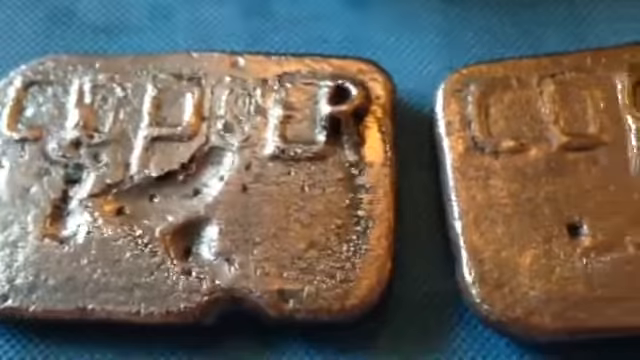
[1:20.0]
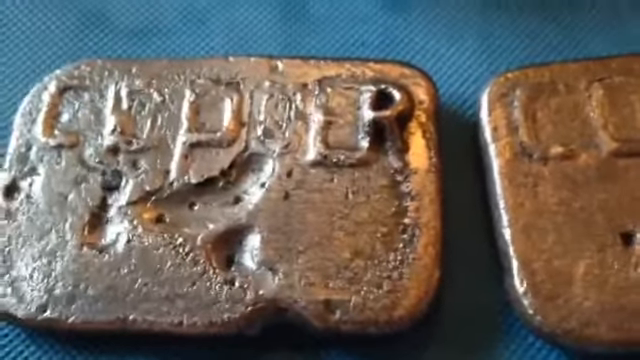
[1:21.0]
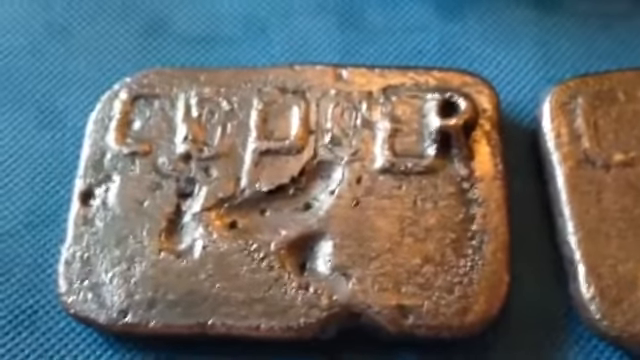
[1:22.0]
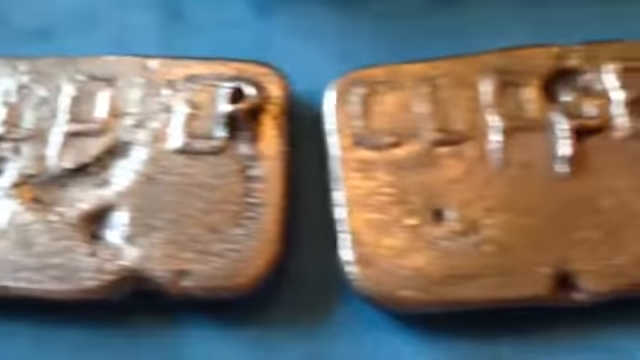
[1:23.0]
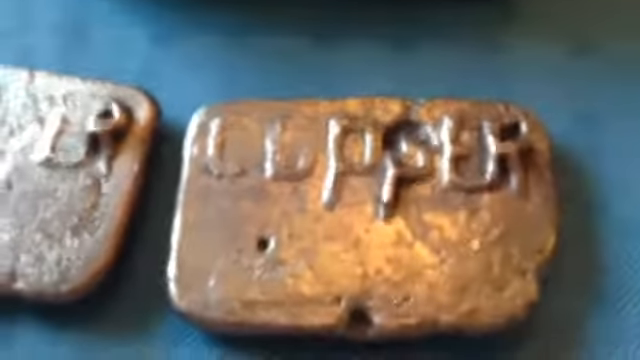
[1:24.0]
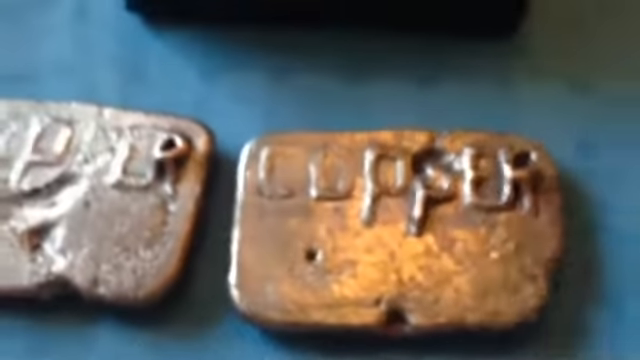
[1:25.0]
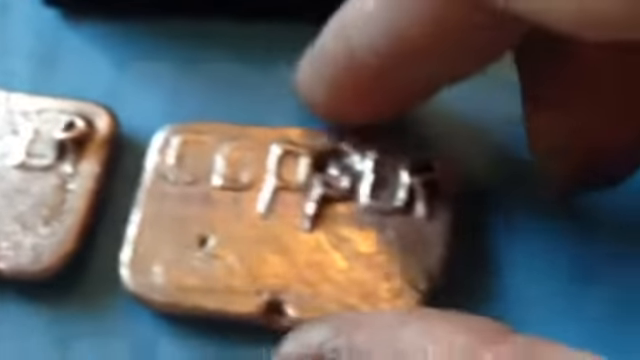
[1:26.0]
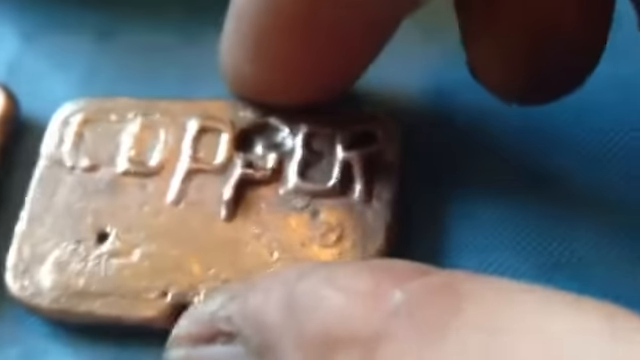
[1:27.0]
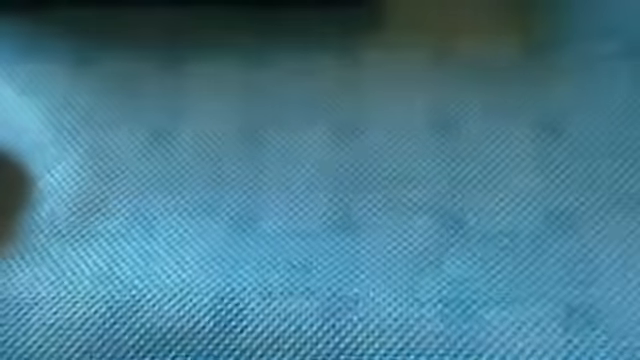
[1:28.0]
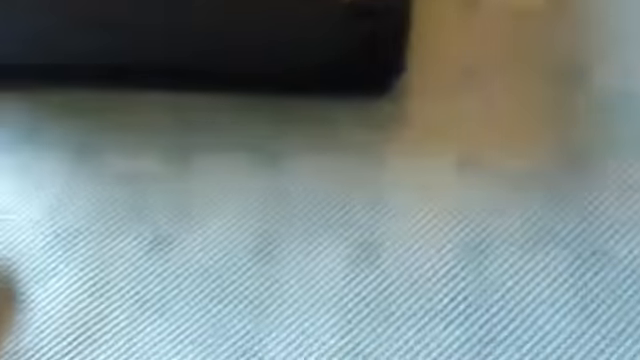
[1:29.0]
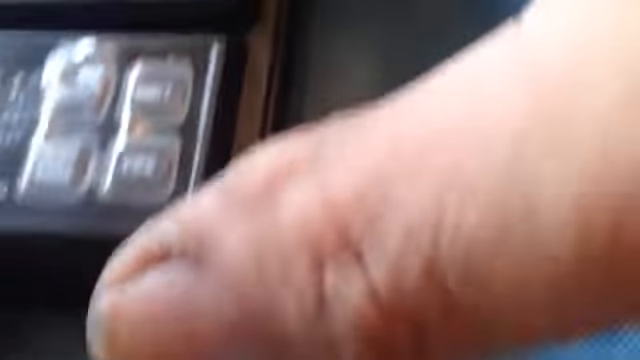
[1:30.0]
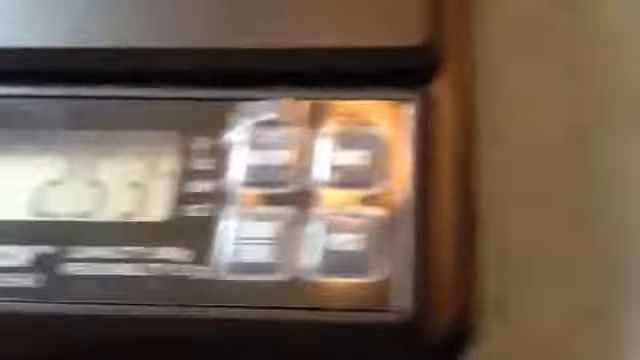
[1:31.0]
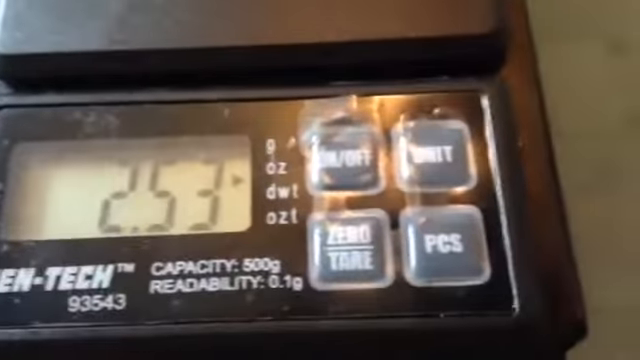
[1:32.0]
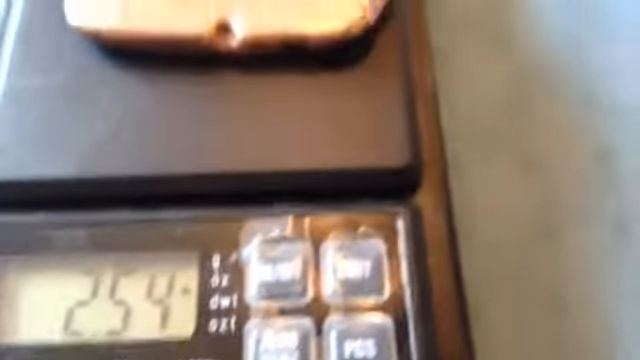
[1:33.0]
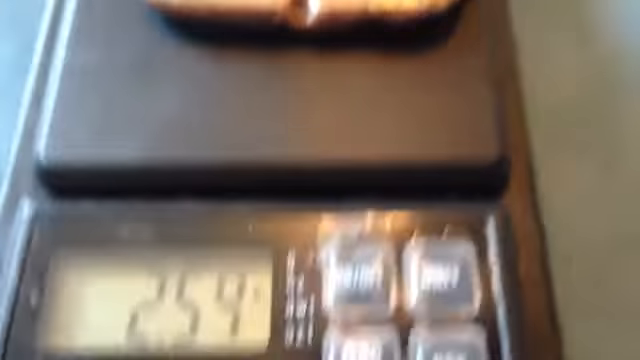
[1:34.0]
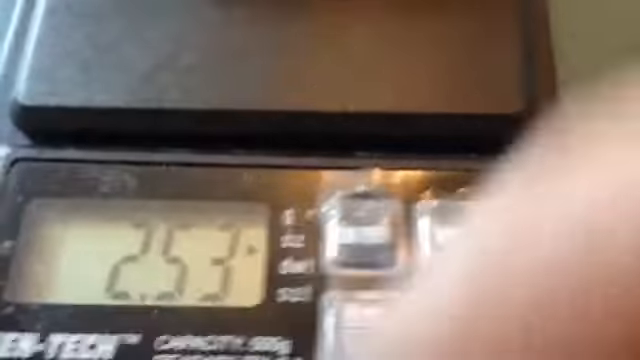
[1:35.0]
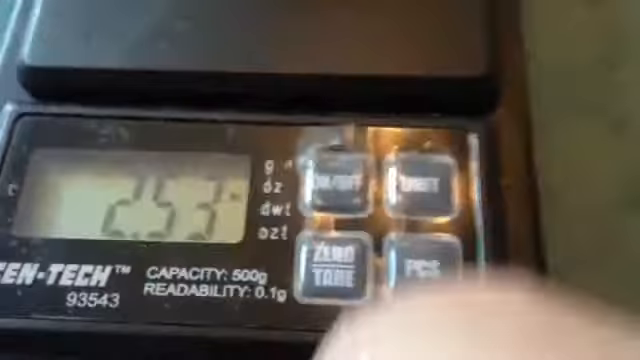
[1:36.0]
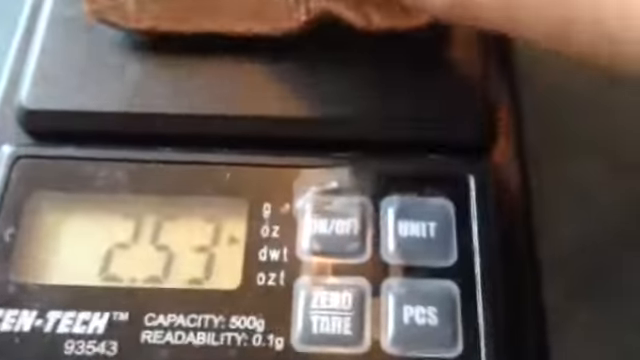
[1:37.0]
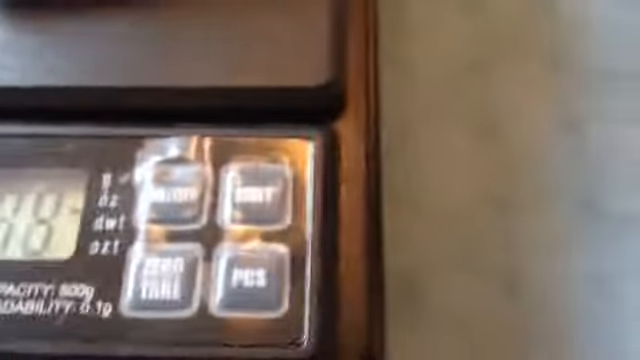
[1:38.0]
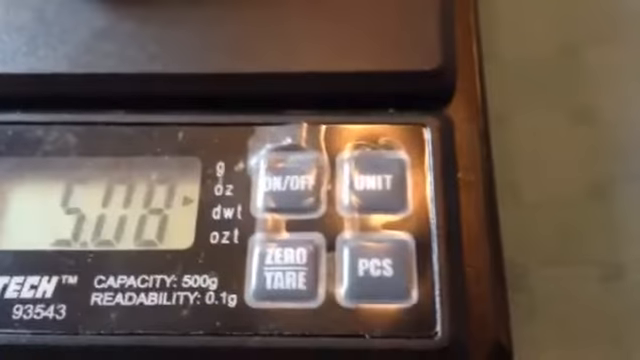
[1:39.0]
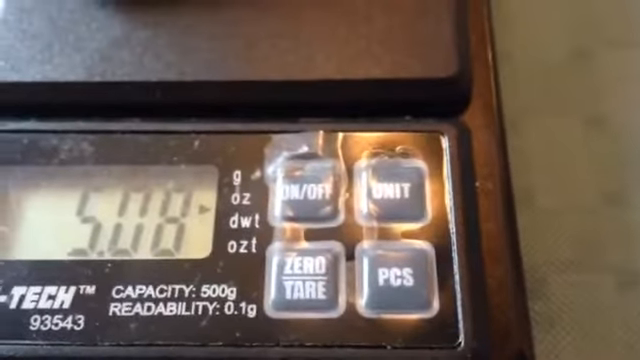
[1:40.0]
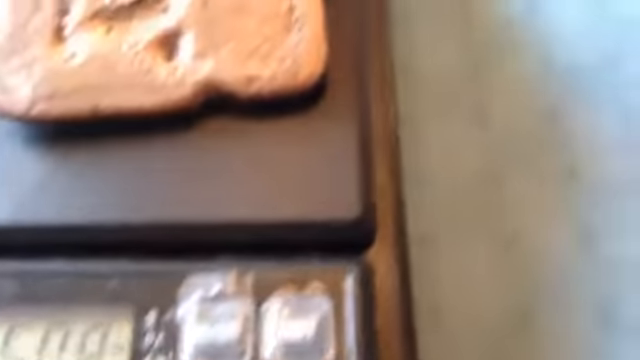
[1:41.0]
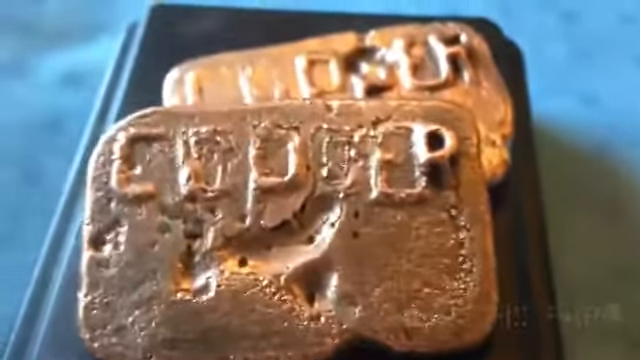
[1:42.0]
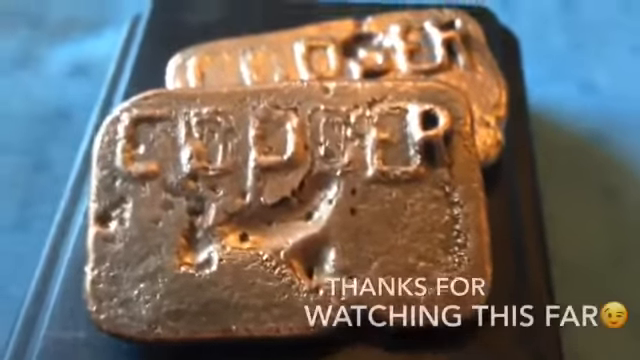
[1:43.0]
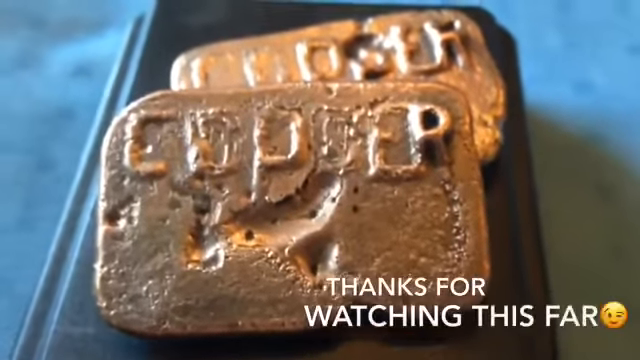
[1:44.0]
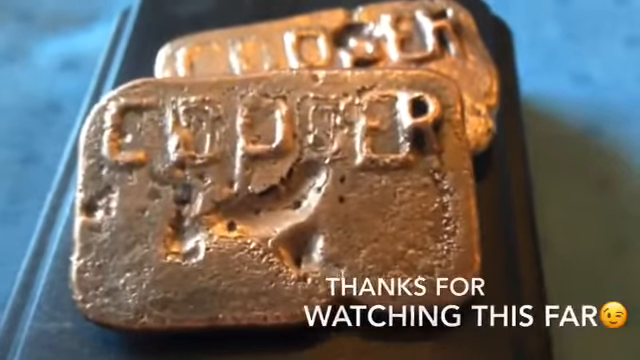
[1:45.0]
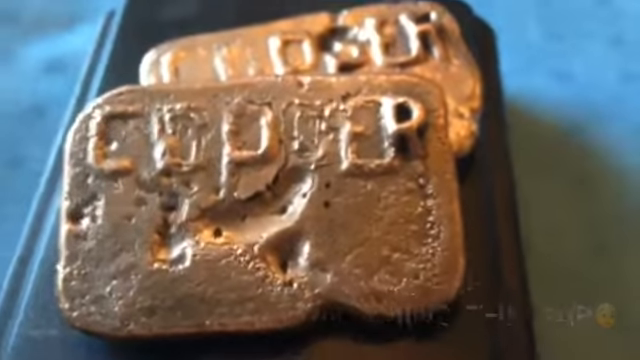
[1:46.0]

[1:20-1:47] Two rounded square pieces, silver and gold in color, each with the word "copper" inscribed at the very top, are on a blue sheet with small holes. The camera is brought very close, and the person's right hand touches the small pieces, each about the size of his palm. A digital weighing scale shows "2.53" in black on a gray background, with buttons with white font to the right and a gray plate for the weight. He puts two of the copper pieces on the scale, and it reads "5.08." White text at the bottom right says "thanks for watching this far," and on the far right is a yellow circle with a black face, like an emoji, winking and smiling.